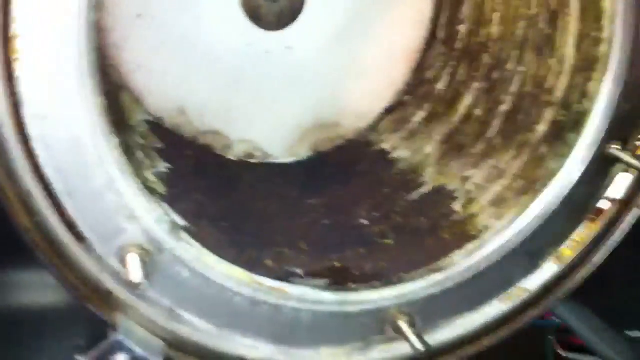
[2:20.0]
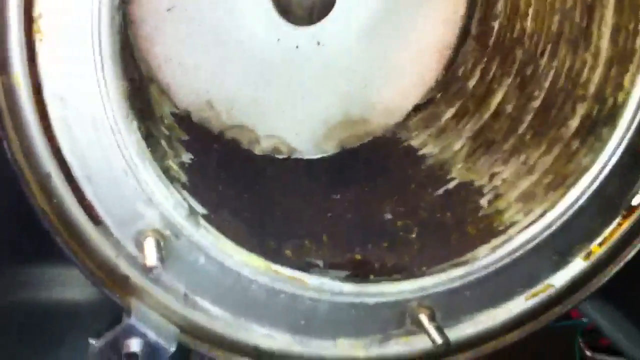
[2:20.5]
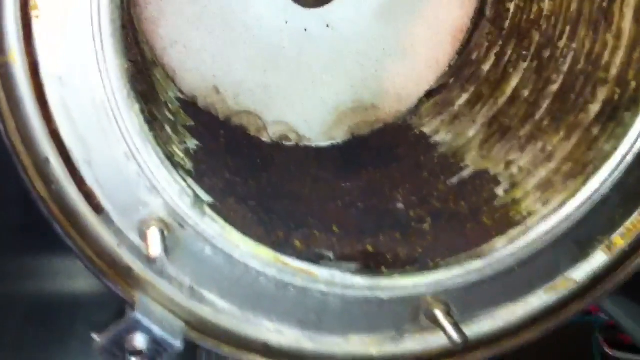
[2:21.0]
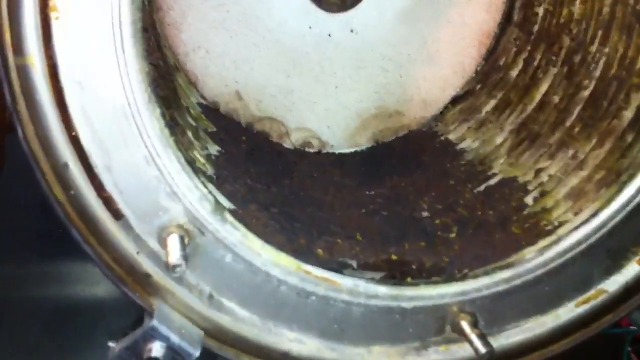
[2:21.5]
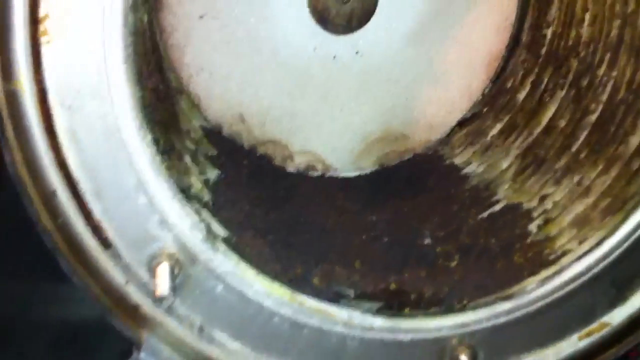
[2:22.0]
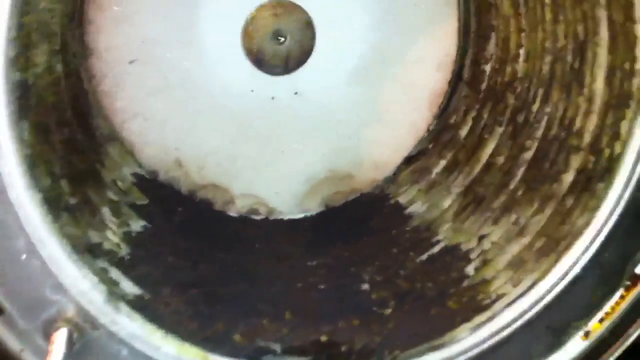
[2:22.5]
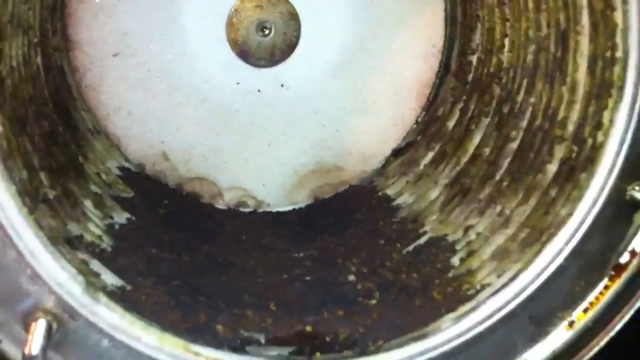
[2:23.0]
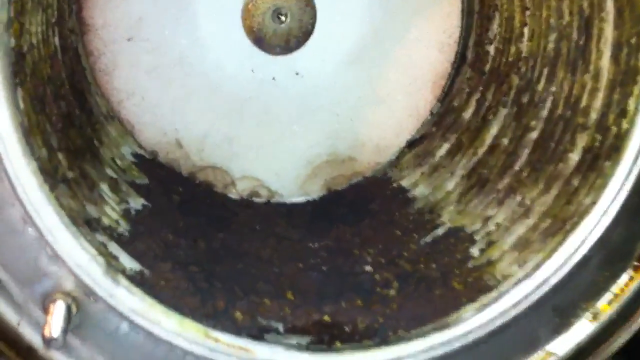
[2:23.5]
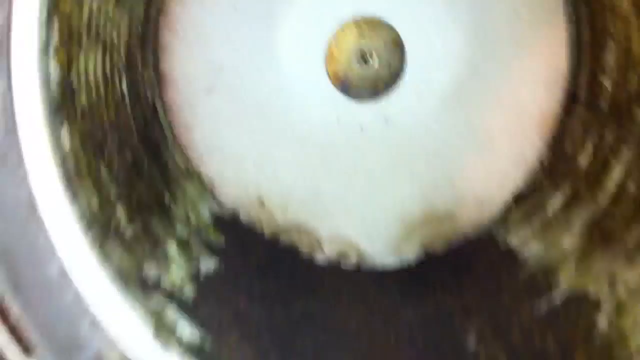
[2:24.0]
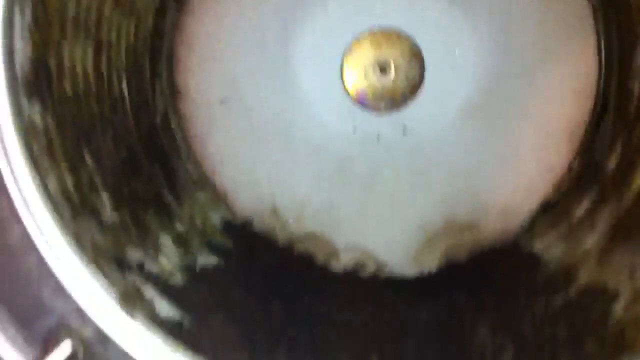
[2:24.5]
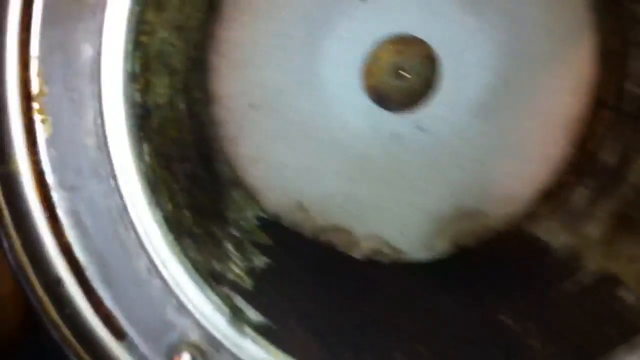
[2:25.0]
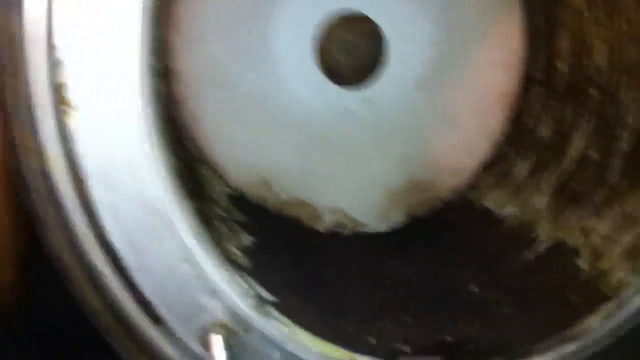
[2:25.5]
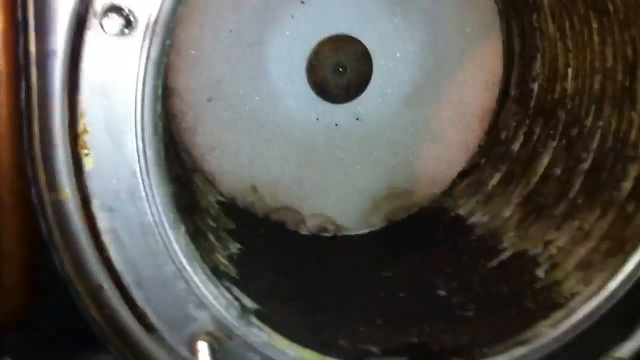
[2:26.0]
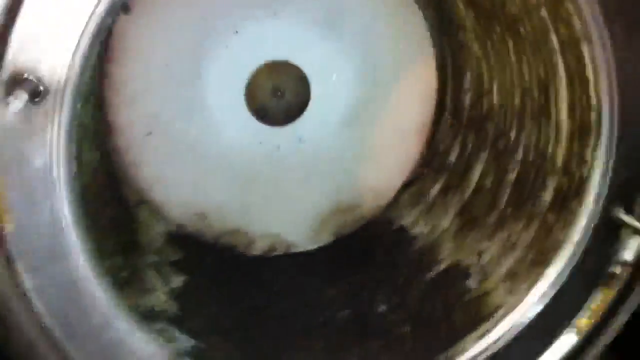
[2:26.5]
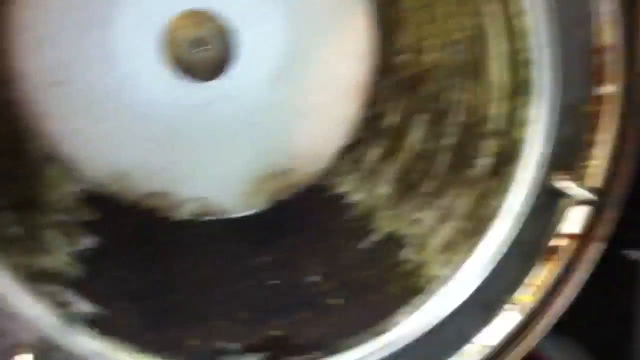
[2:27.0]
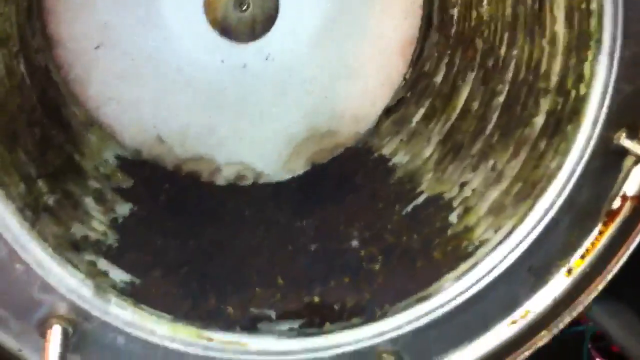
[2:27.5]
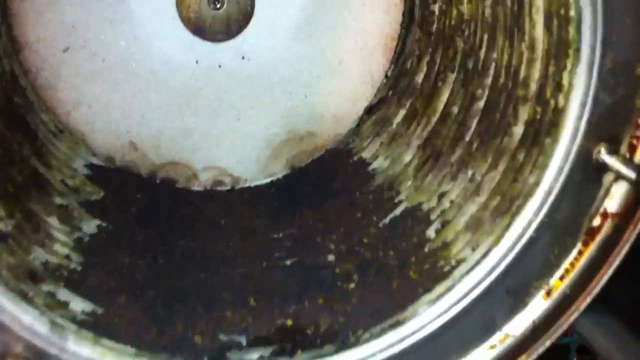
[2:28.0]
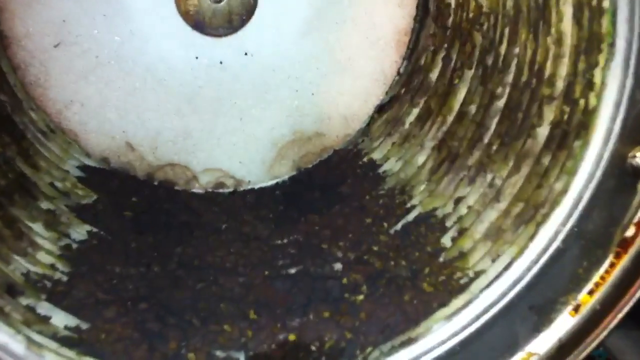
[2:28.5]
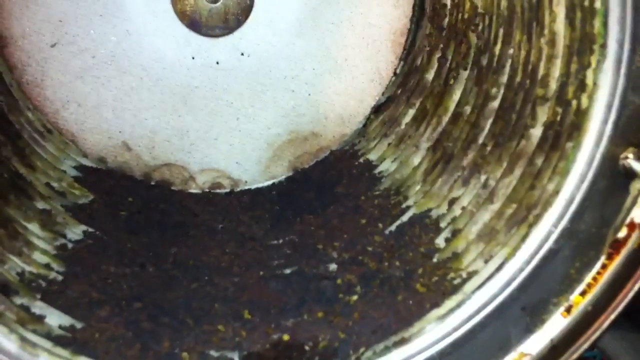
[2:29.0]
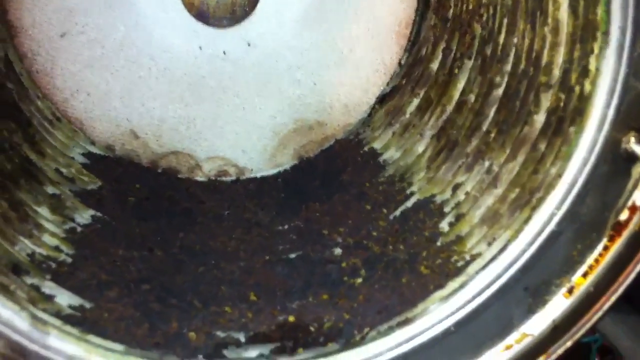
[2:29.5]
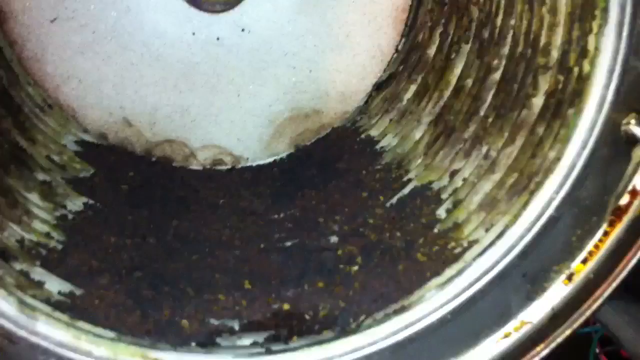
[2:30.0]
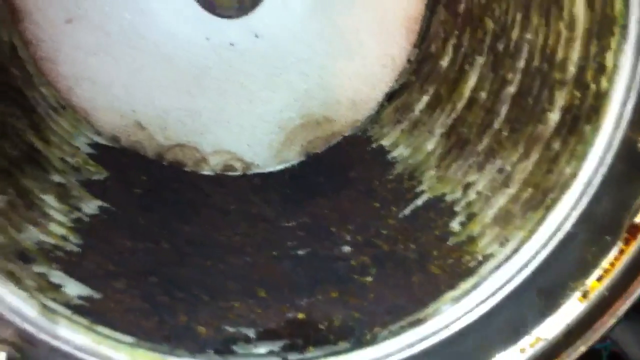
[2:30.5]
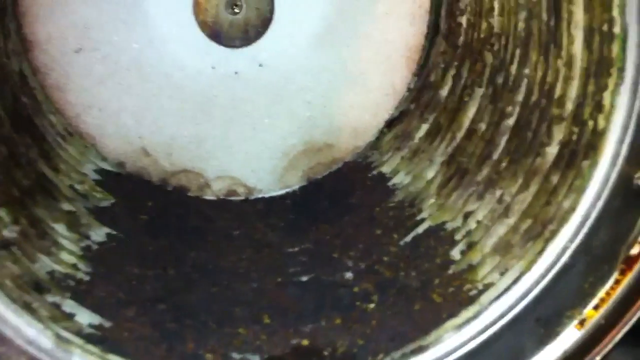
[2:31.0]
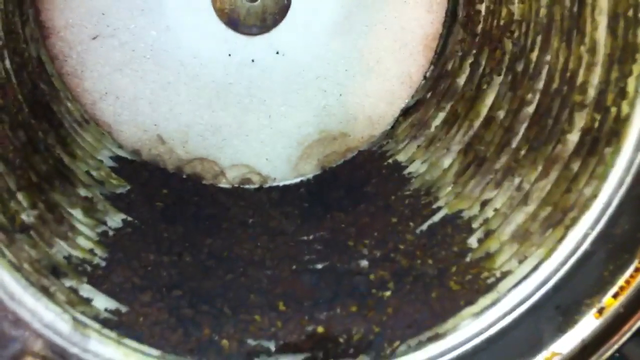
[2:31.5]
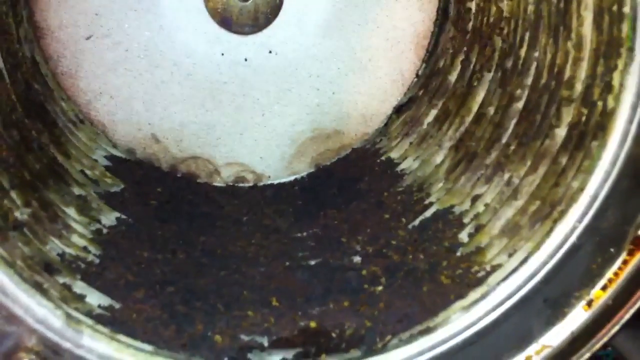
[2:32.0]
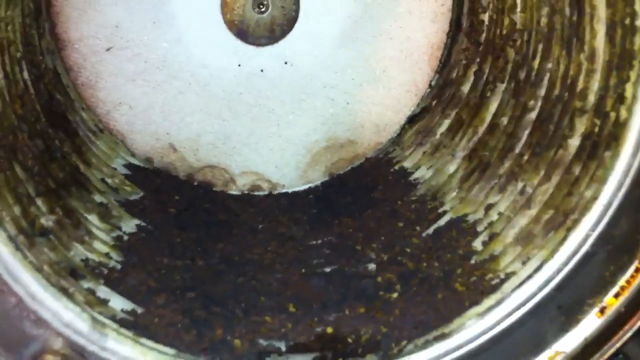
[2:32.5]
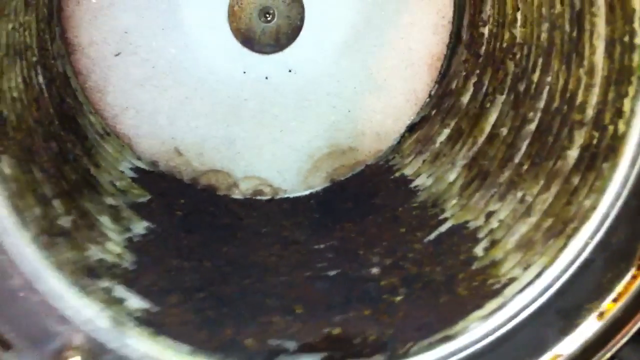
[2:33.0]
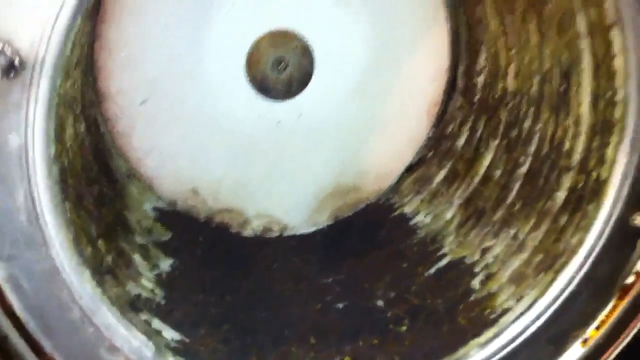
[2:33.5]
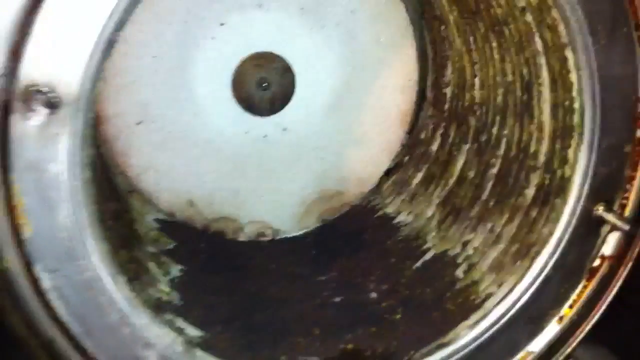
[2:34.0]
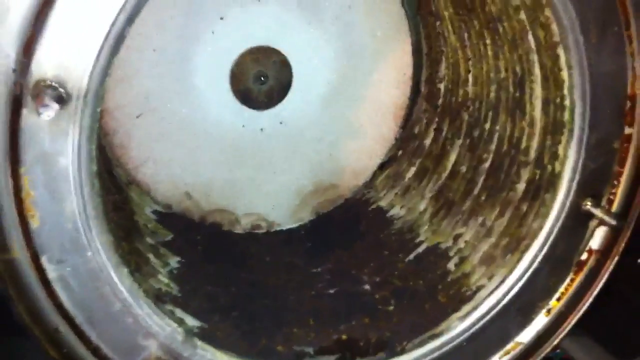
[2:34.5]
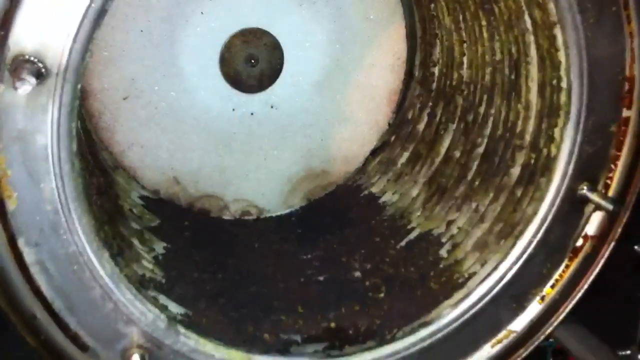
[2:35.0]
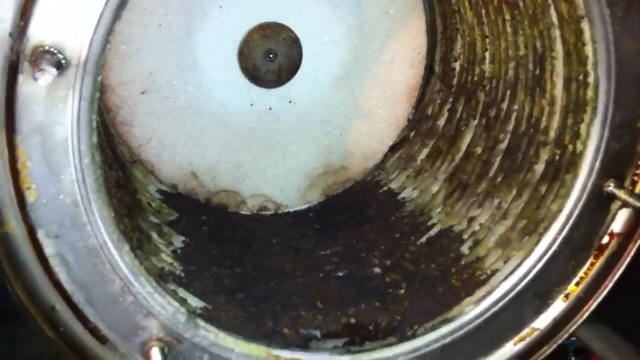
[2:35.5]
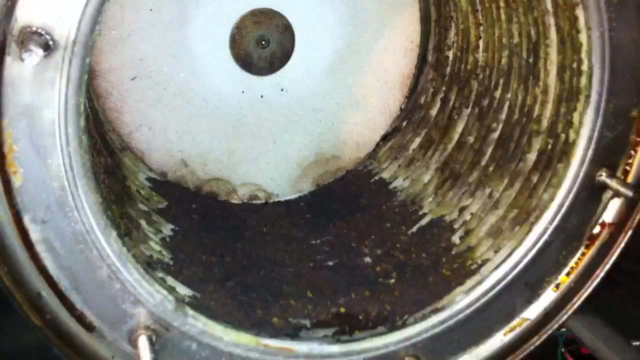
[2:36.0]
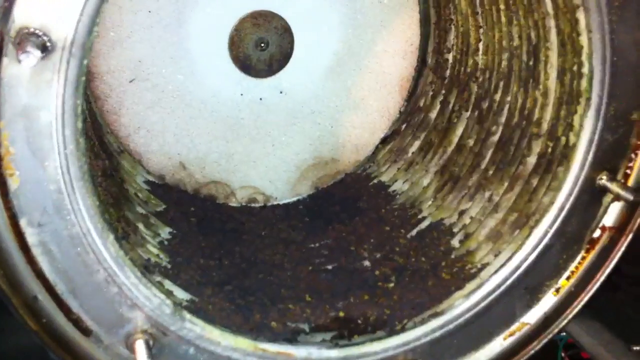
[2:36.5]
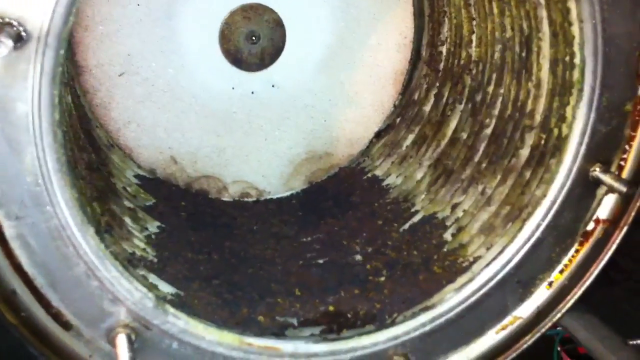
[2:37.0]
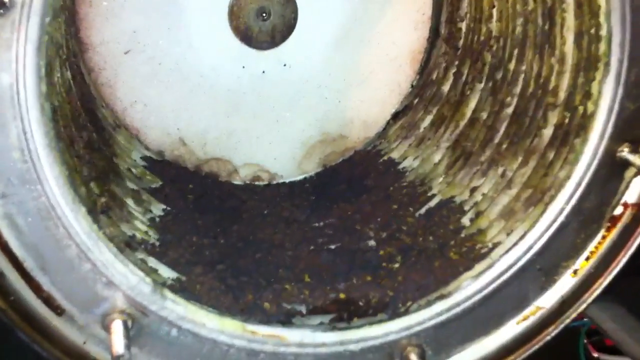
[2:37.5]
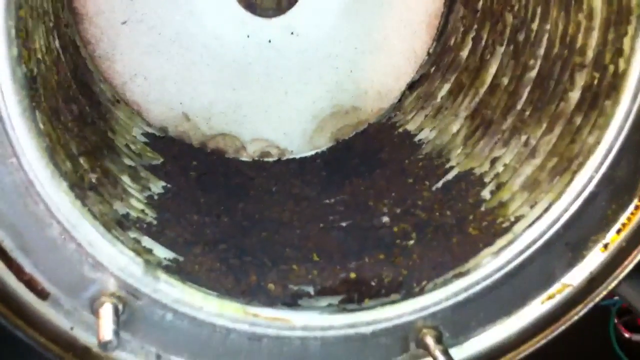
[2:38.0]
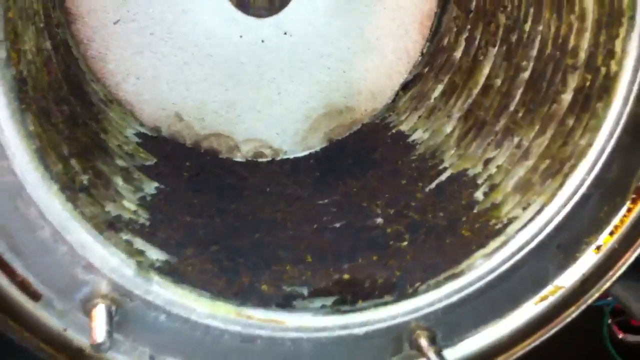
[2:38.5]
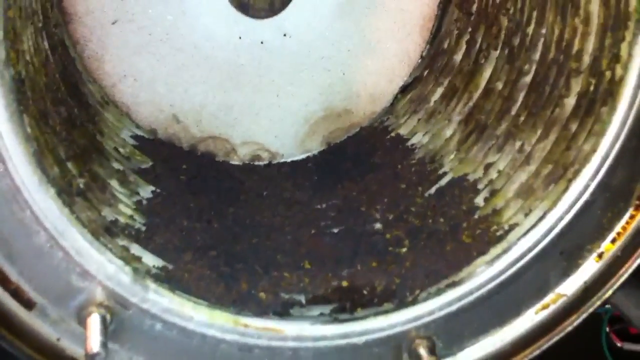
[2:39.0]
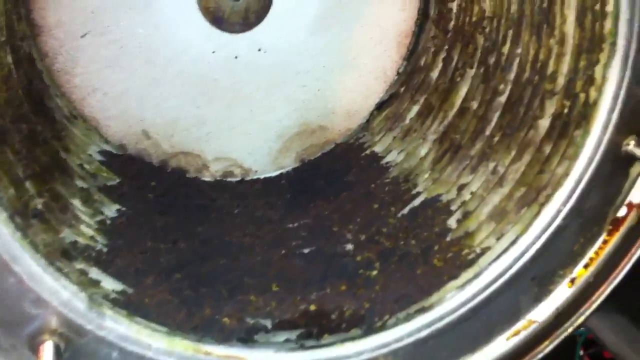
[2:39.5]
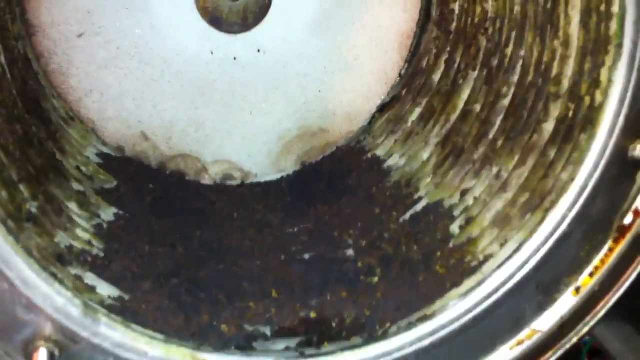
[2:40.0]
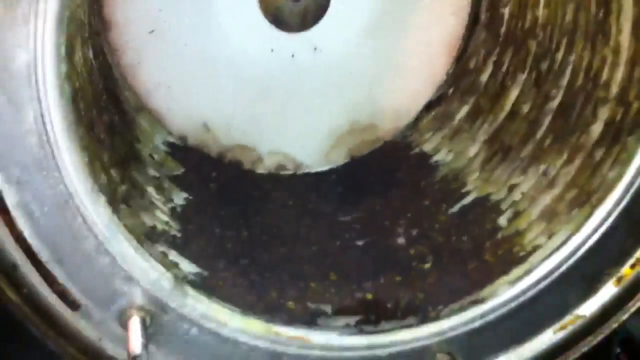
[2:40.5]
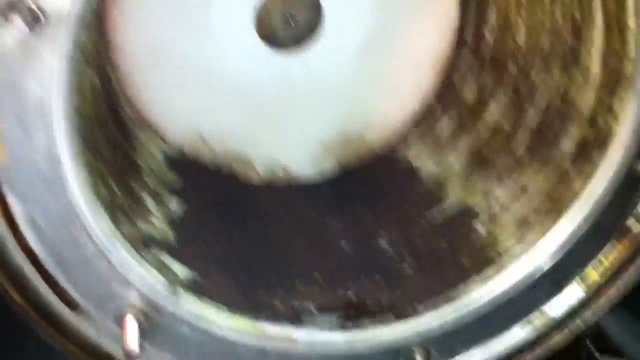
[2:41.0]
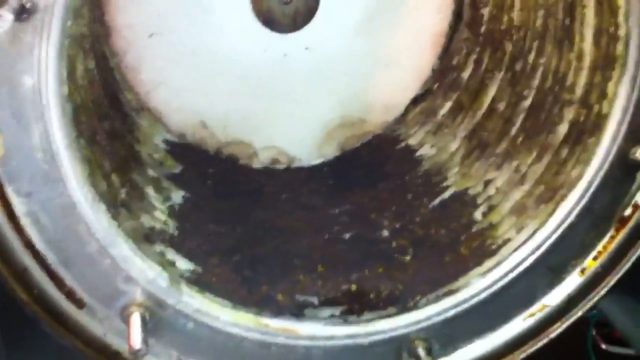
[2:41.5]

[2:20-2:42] He is brushing at the dirty silver bin, which looks very old and has mold, algae, rust and bacteria-looking stuff on it. He then stops scrubbing and just examines it, pointing the camera and the light inside the little silver tunnel. It is completely covered in dirt, mold and rust.